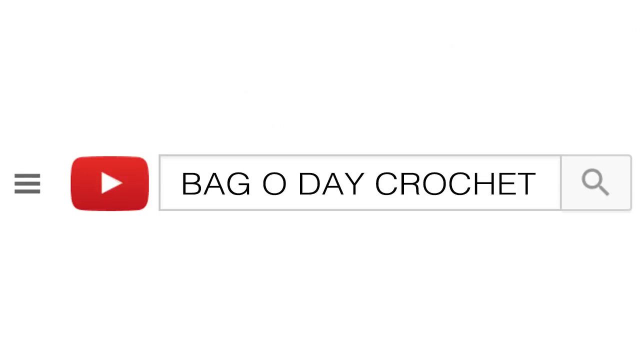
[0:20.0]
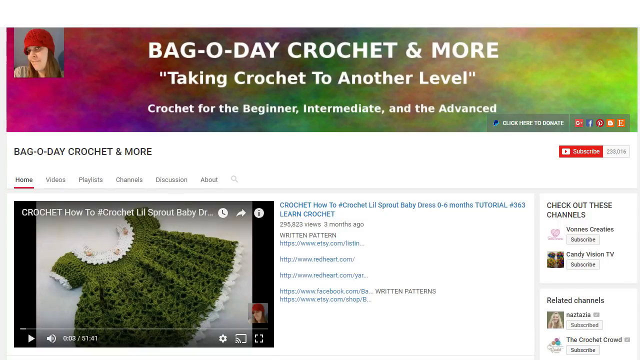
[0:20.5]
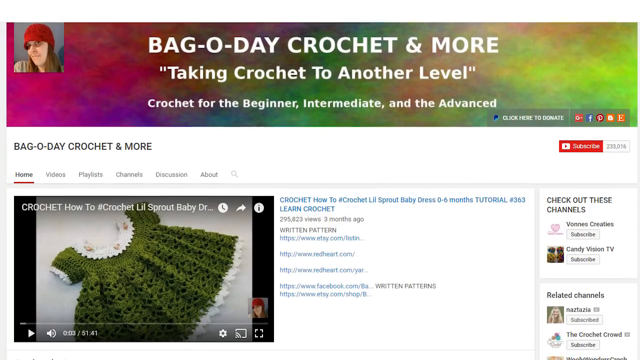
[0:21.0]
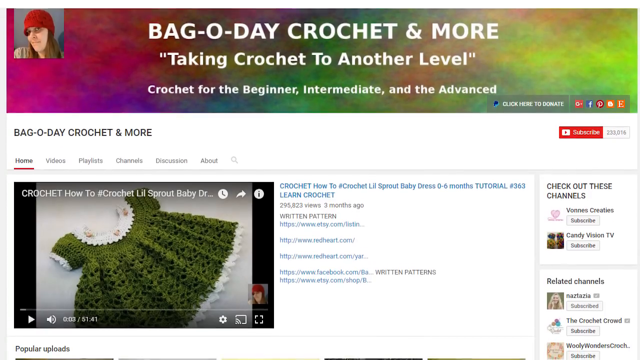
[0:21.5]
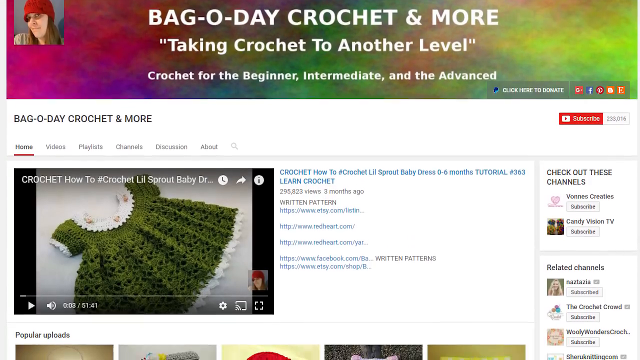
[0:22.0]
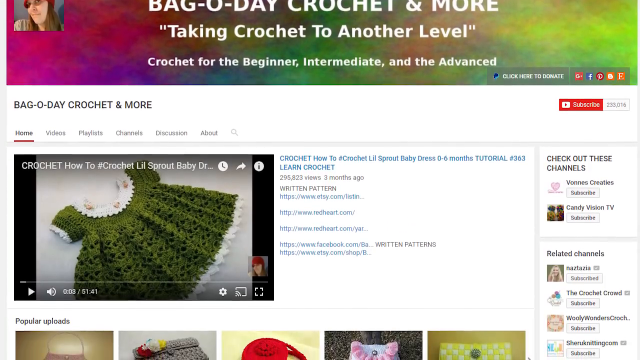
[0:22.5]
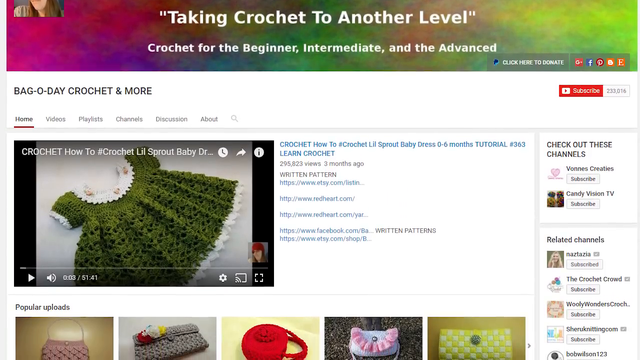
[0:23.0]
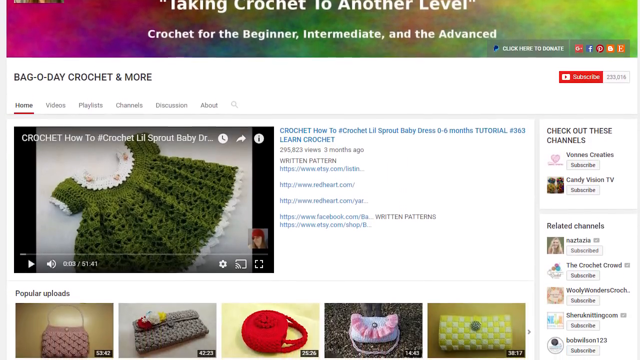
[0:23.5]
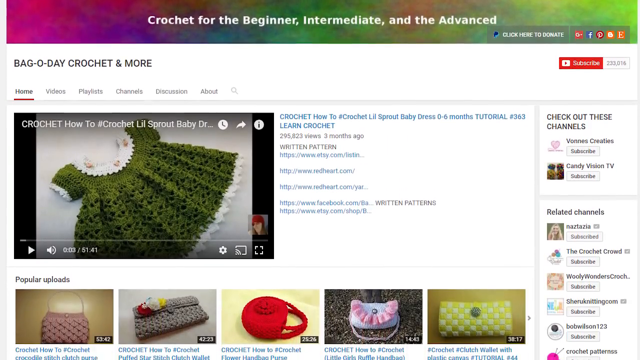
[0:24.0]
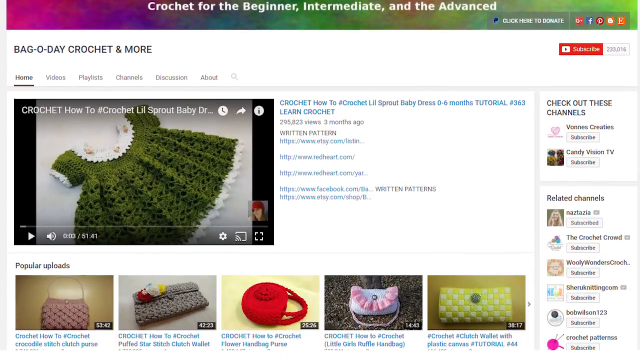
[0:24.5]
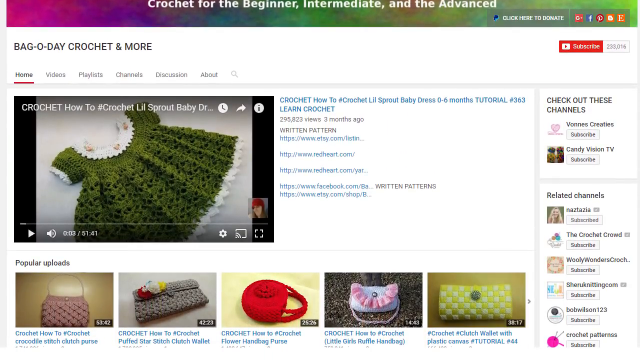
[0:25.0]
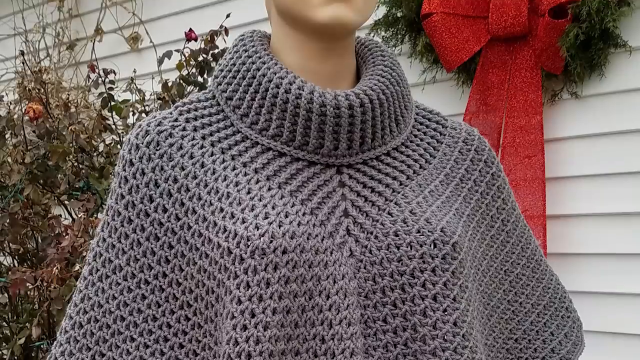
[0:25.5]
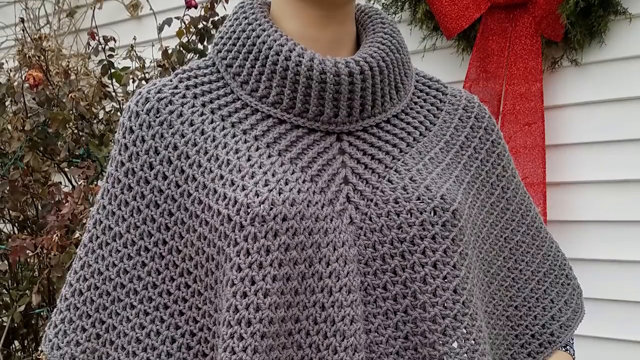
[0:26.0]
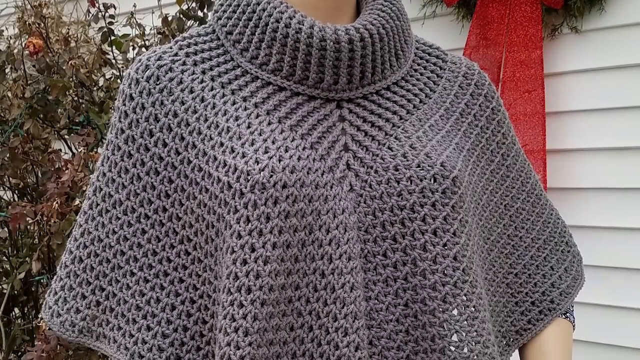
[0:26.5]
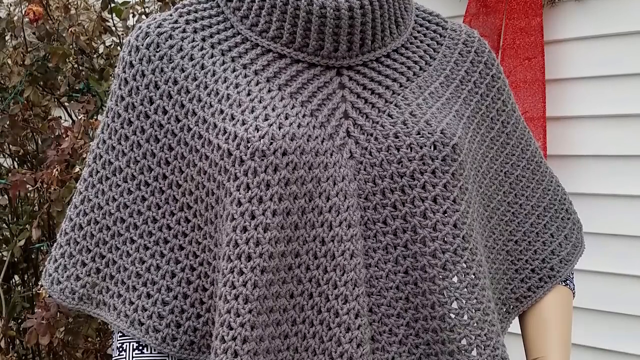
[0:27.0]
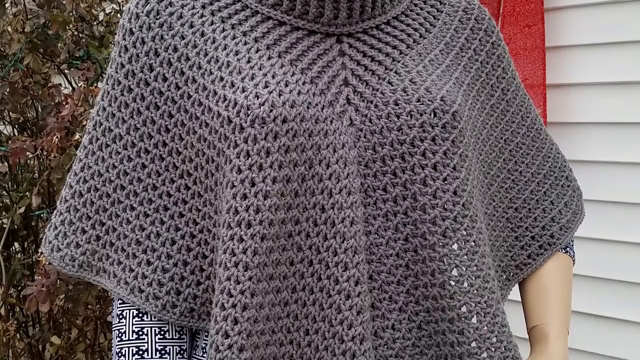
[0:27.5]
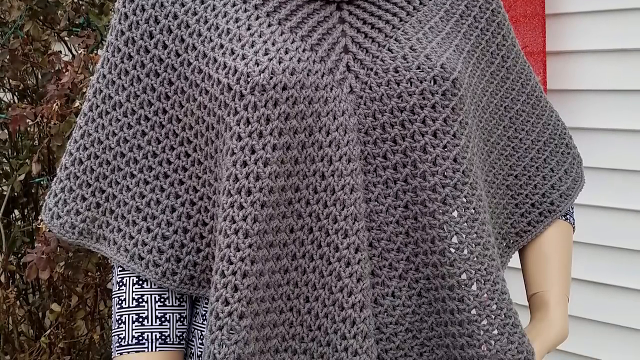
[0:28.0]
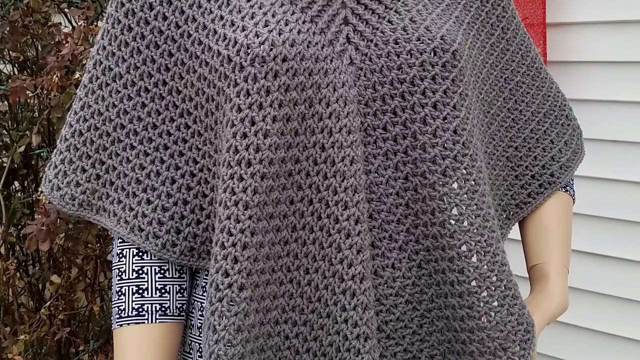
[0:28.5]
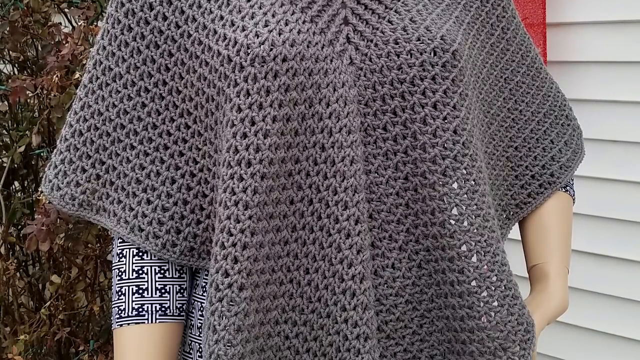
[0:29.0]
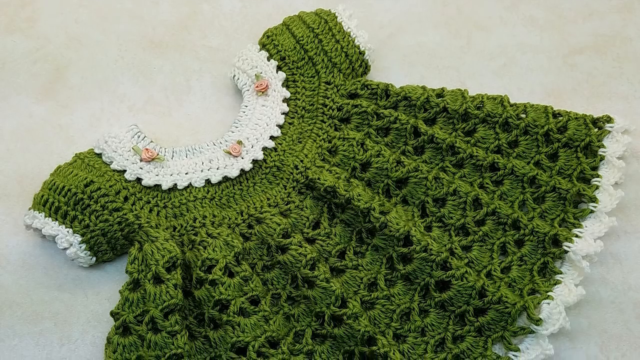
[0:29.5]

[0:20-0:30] The Bag O'Day Crochet screen with the little sprout dress returns, and the website is scrolled down. Beneath the sprout dress tutorial are some popular uploads, mainly purses and bags: a bag, what looks like a purse, and another bag. The next photograph is of a grey crocheted poncho with a turned-down collar, and the camera pans down it from top to bottom. It then pans down the sprout dress. The dress is short-sleeved, the yarn it is made from looks quite chunky, and the skirt has a lacy effect.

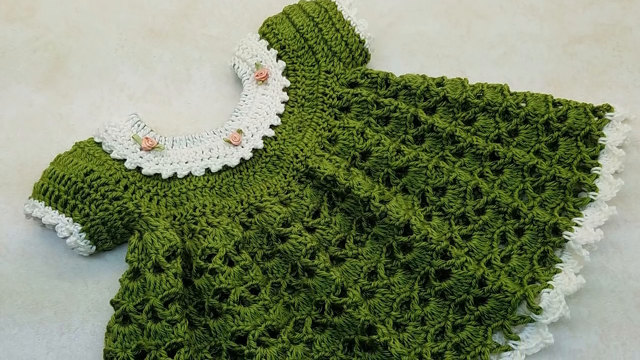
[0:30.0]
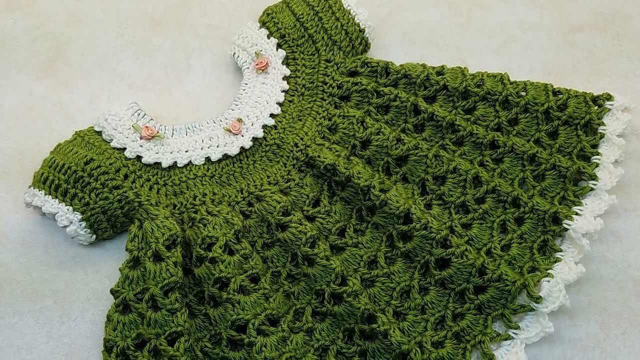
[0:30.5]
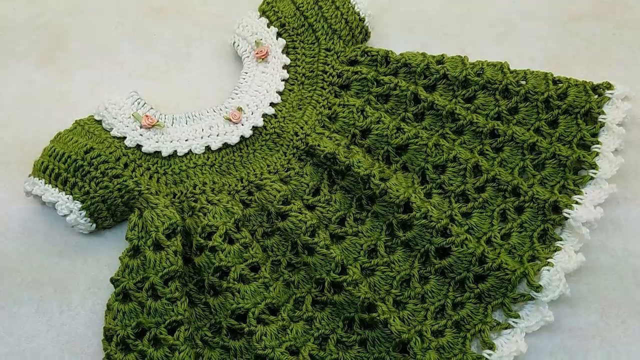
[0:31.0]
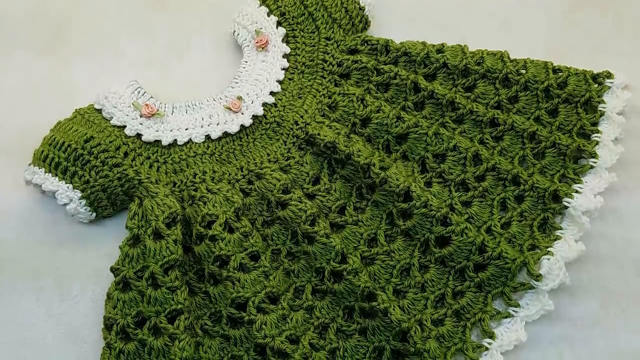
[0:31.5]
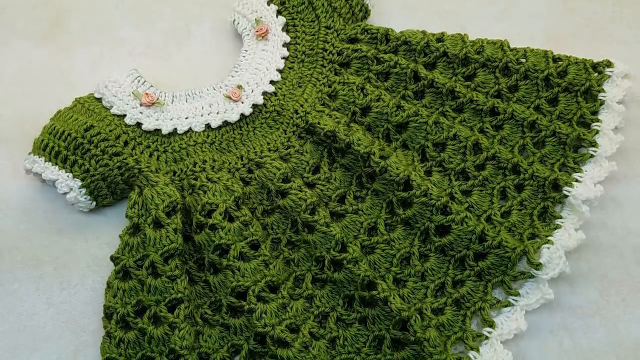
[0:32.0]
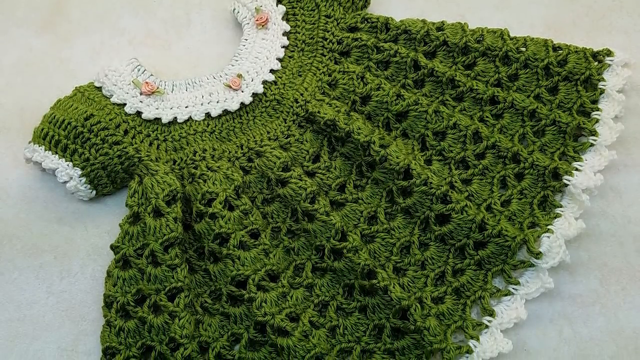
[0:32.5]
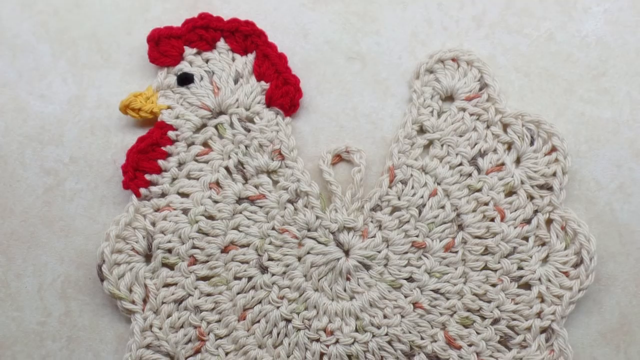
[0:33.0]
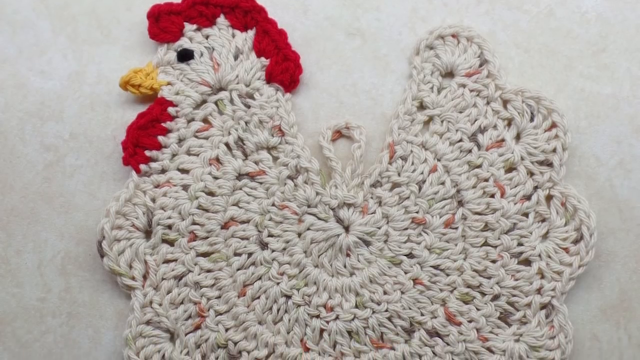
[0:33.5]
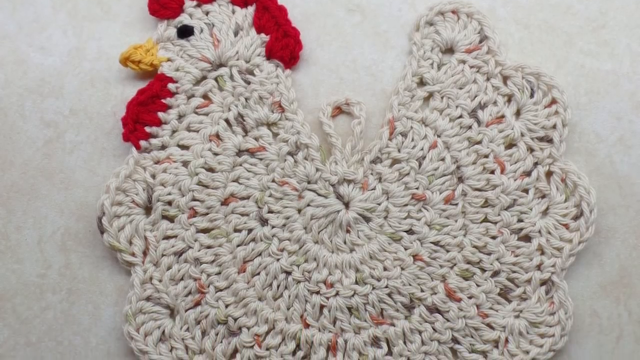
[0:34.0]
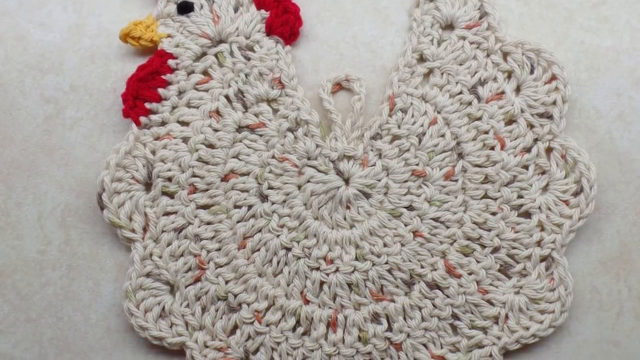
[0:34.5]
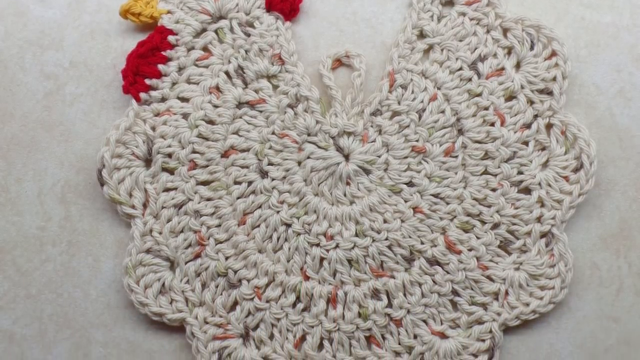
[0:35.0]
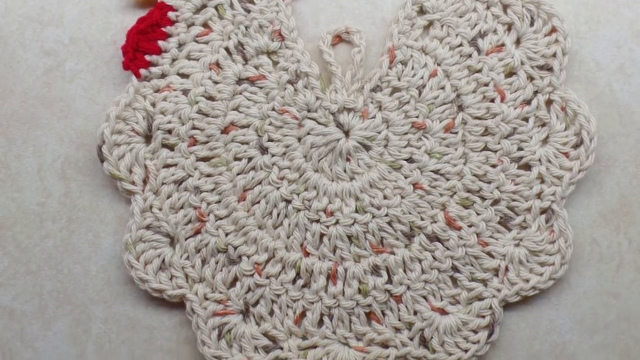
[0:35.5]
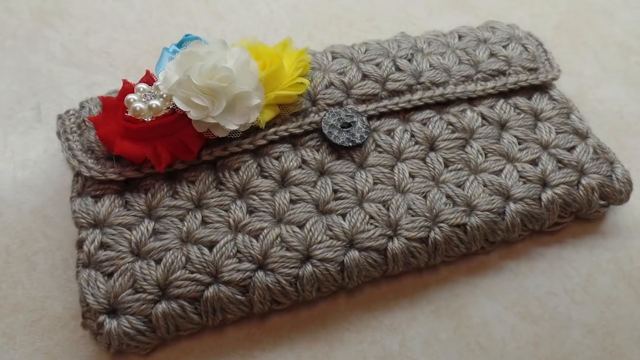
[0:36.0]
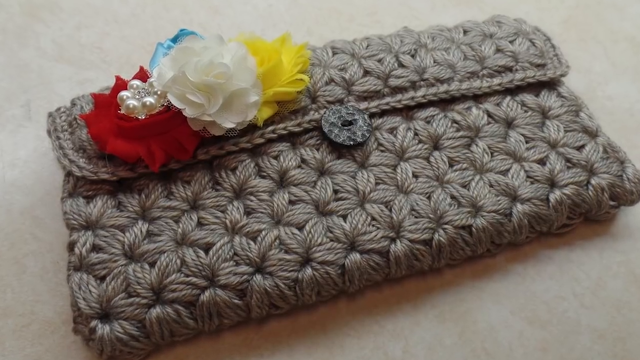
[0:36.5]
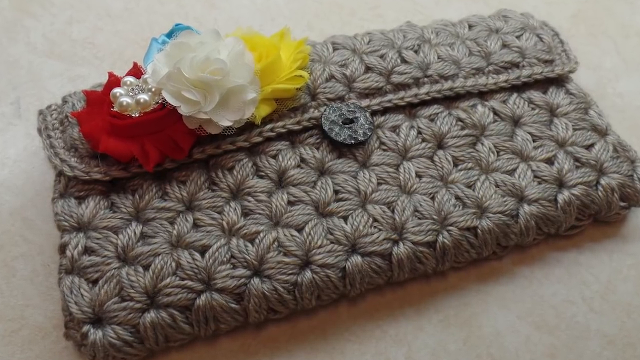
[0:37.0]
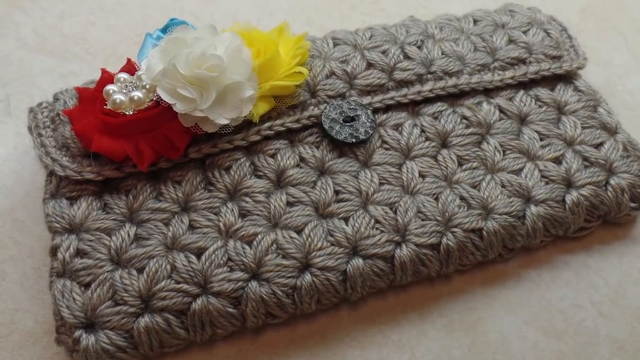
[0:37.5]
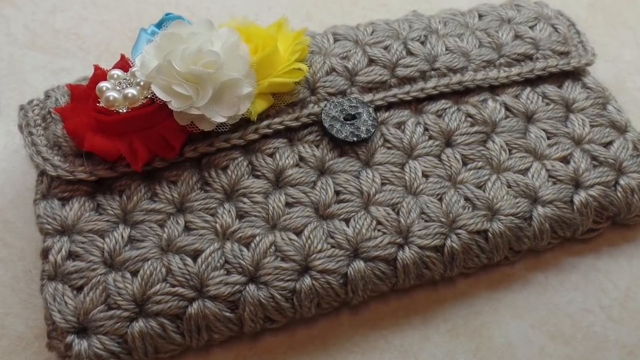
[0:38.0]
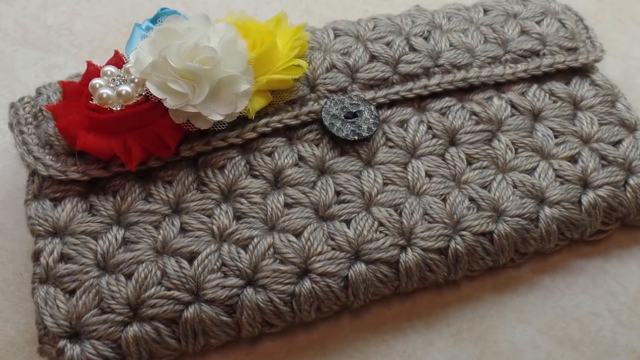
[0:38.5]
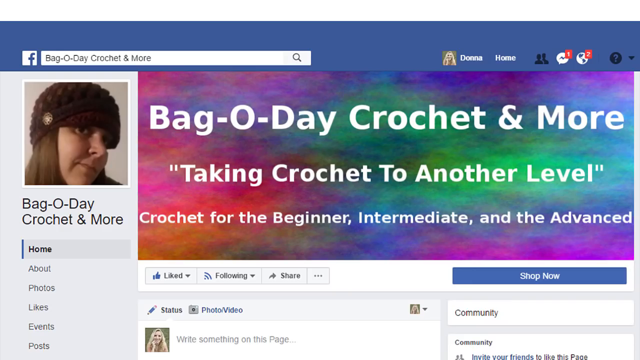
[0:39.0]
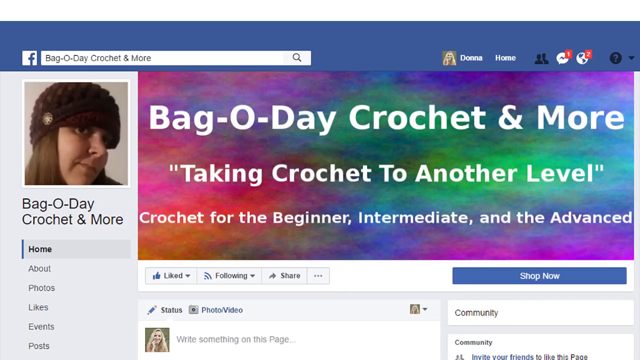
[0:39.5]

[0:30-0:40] The sprout dress is shown, with three little pink roses attached to the white collar. The next photograph is of a crocheted chicken that looks like it is meant to hang, with a hanging loop in the centre. It is made mainly of a white flecky yarn and looks almost like a circle that has been finished early, with a kind of petal effect around the outside. The comb and what is apparently the wattle are bright red, the beak is yellow, and there is a little black beady eye. The next image is of a crocheted purse whose stitches appear to form a kind of flower, like a lily effect. It has a dark, almost snake-print button, and four fabric flowers are attached to the top left-hand side; the red one has a pearl cluster in the centre. The next screen shows Bag O'Day Crochet on Facebook, with the dark-haired woman, this time wearing what looks like a brown crochet hat, and the same banner with the rainbow background.